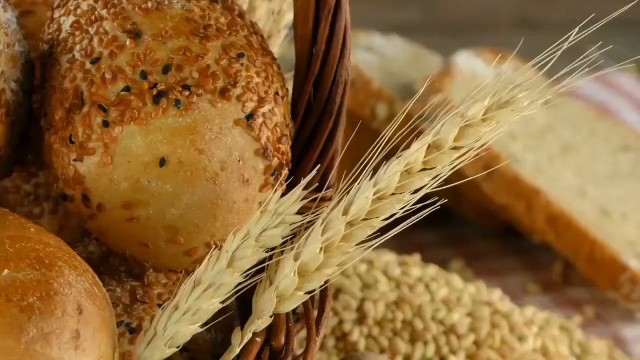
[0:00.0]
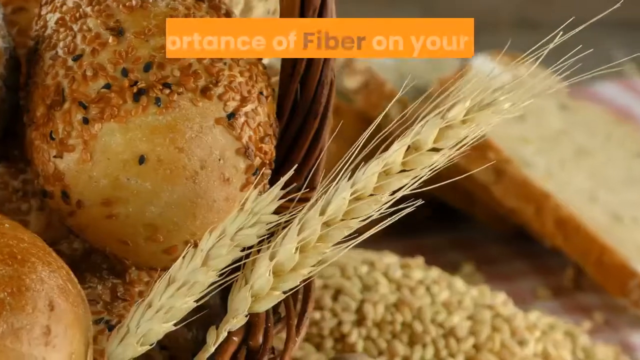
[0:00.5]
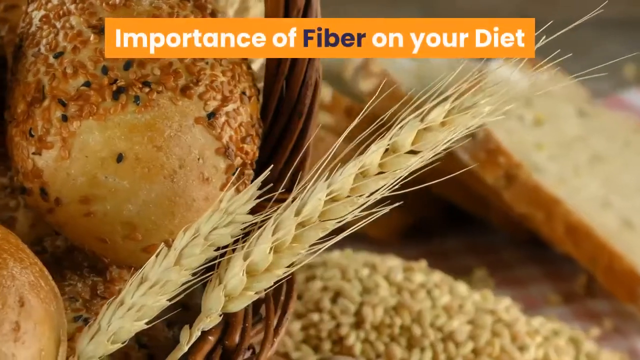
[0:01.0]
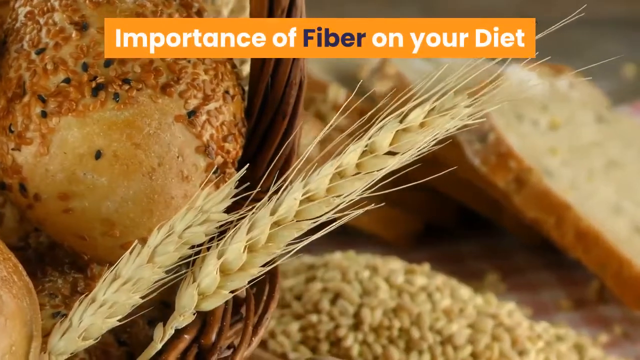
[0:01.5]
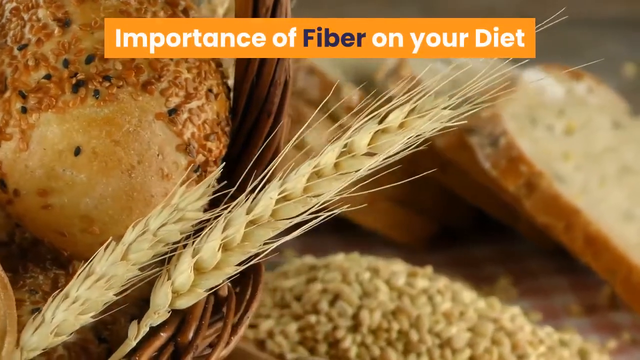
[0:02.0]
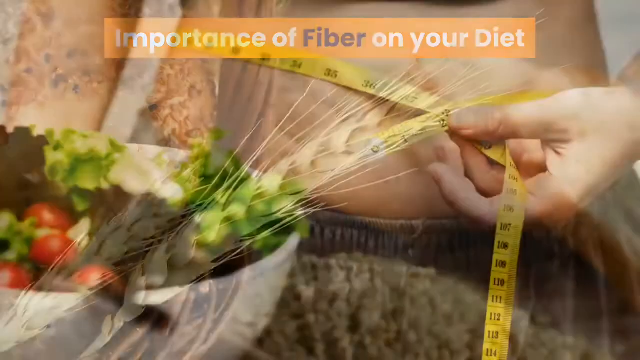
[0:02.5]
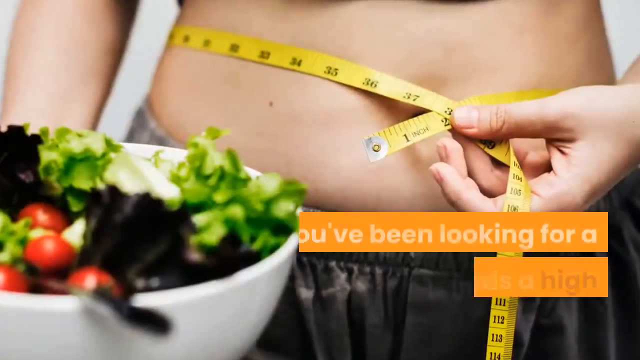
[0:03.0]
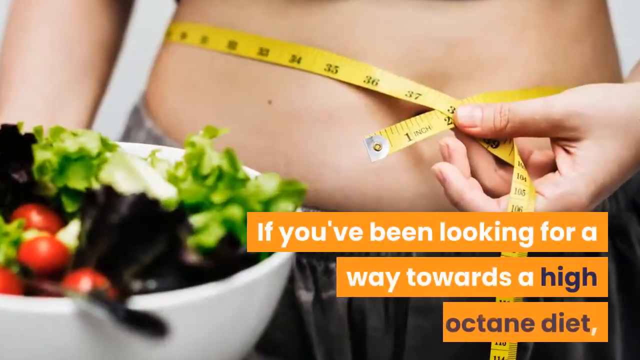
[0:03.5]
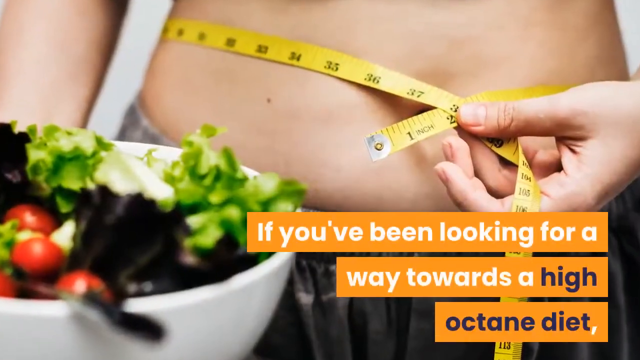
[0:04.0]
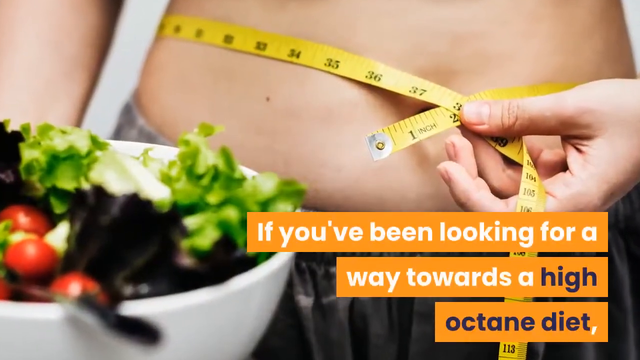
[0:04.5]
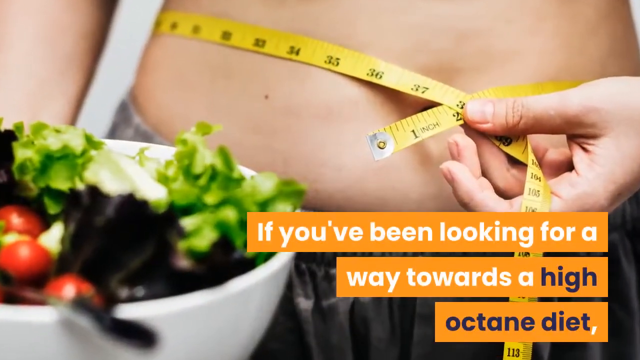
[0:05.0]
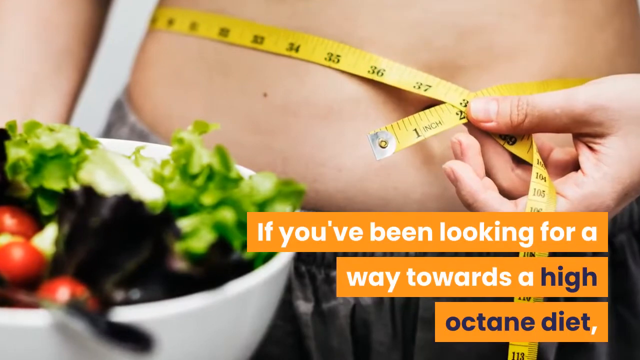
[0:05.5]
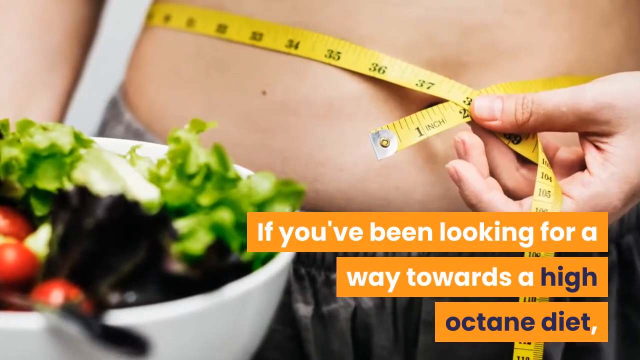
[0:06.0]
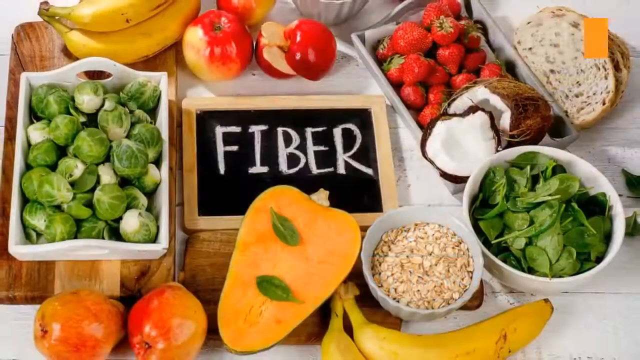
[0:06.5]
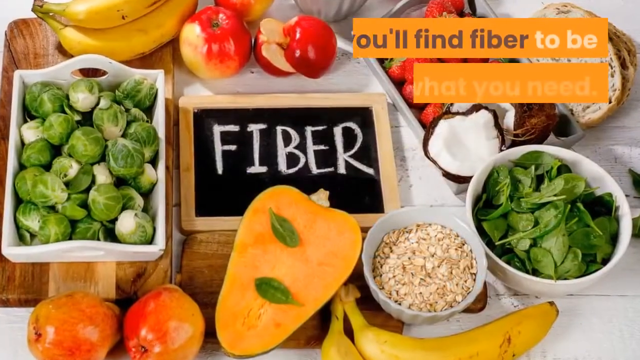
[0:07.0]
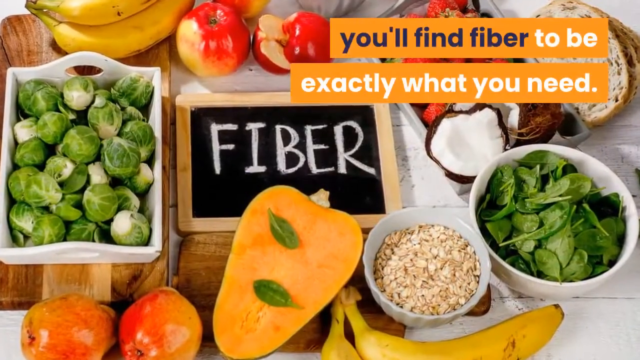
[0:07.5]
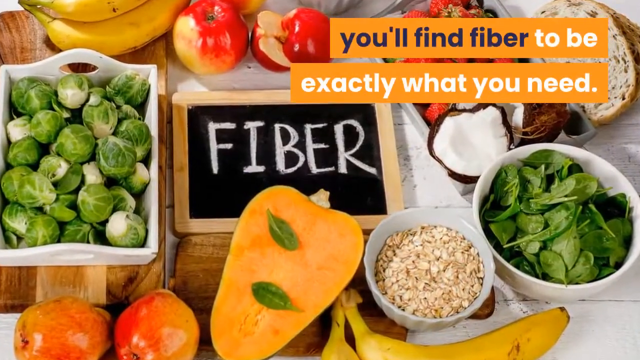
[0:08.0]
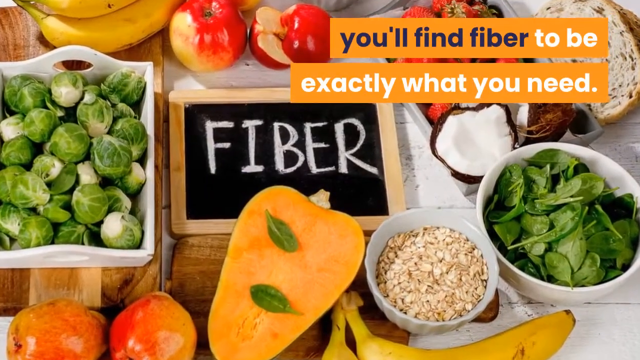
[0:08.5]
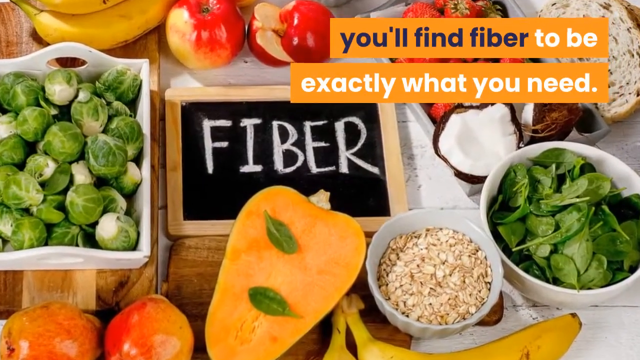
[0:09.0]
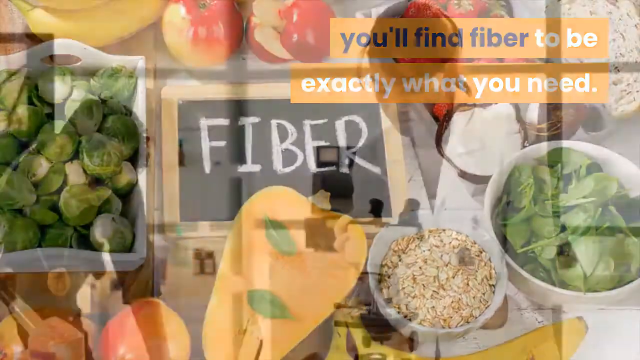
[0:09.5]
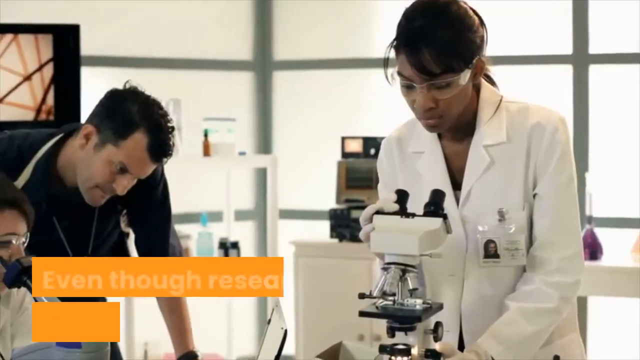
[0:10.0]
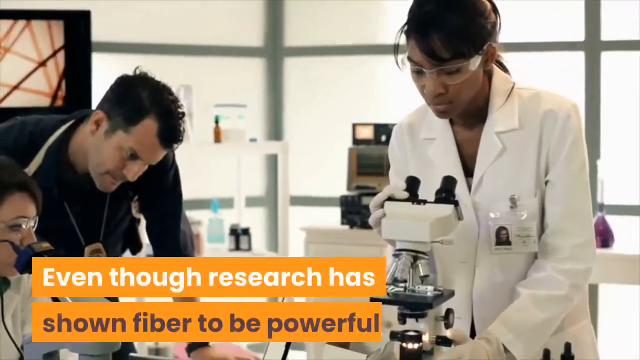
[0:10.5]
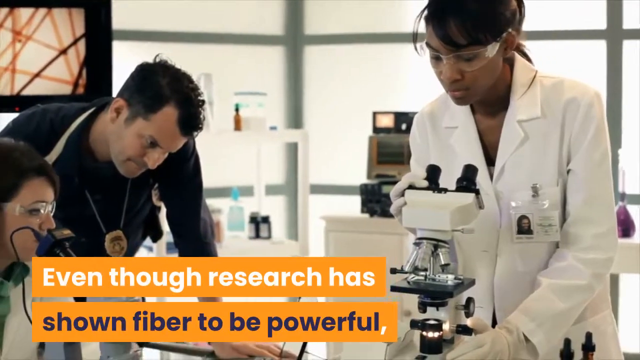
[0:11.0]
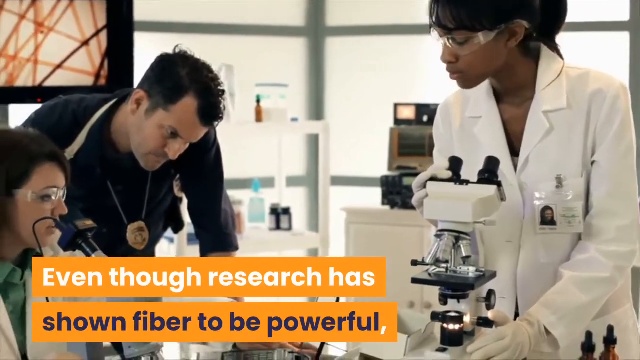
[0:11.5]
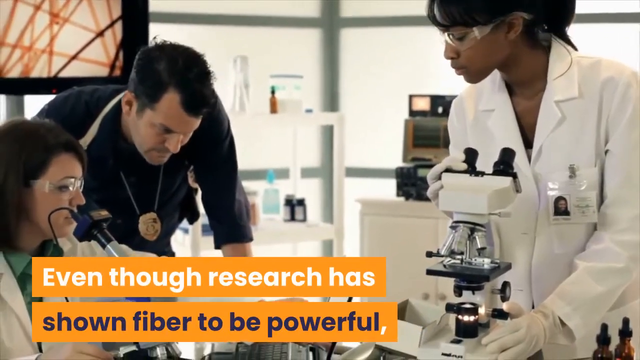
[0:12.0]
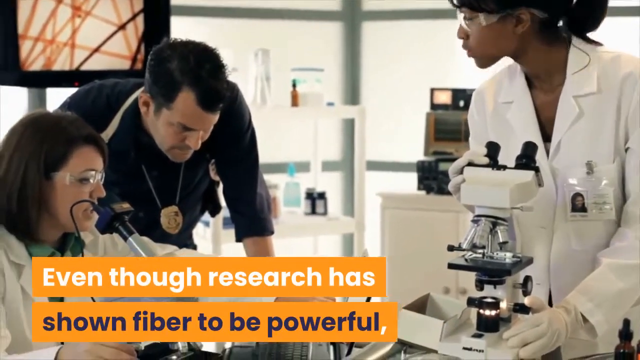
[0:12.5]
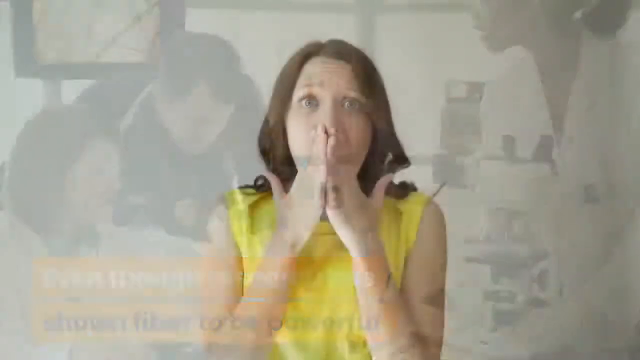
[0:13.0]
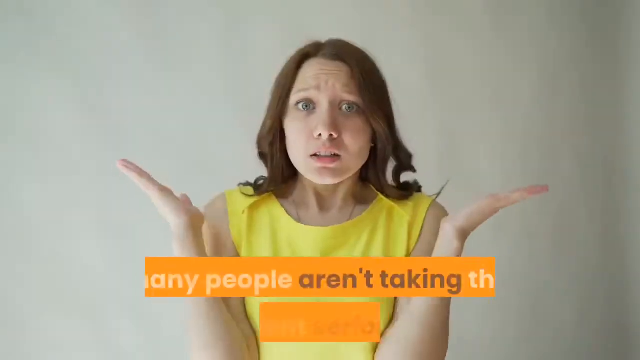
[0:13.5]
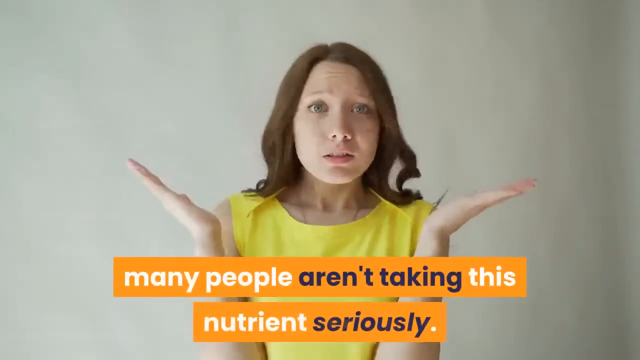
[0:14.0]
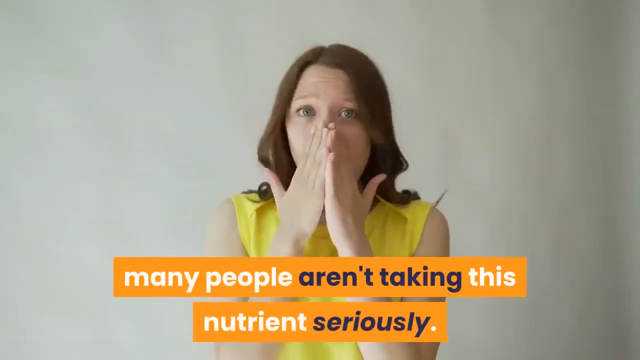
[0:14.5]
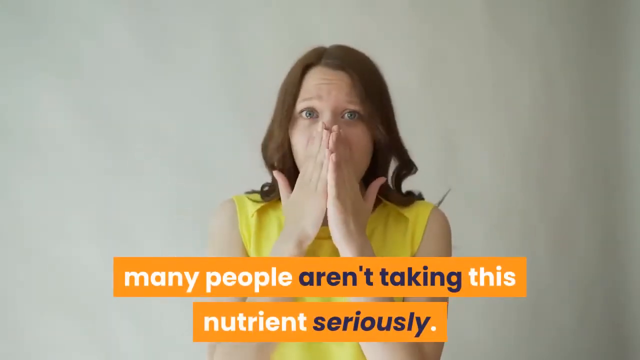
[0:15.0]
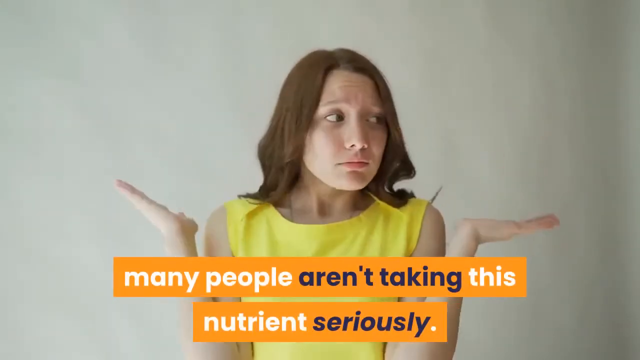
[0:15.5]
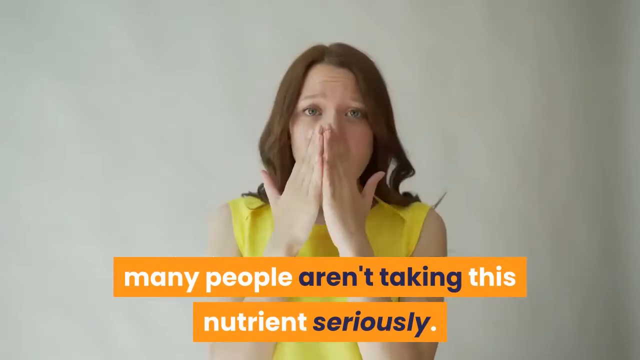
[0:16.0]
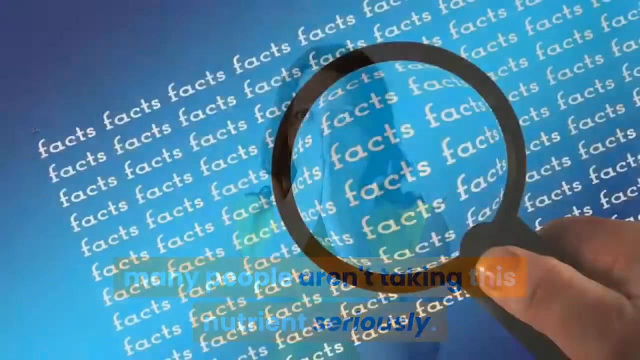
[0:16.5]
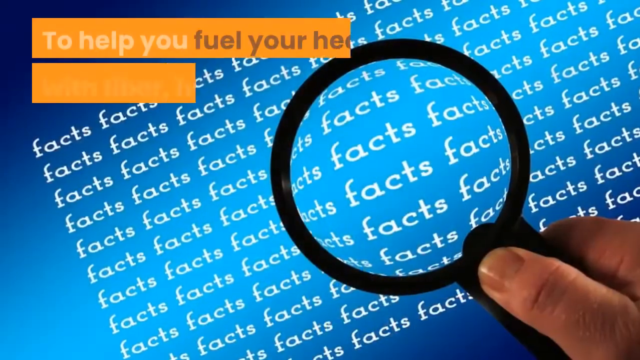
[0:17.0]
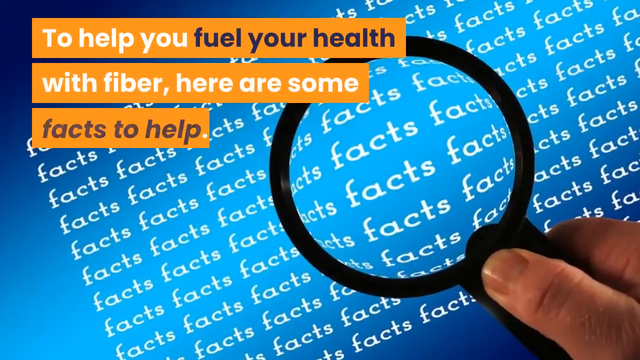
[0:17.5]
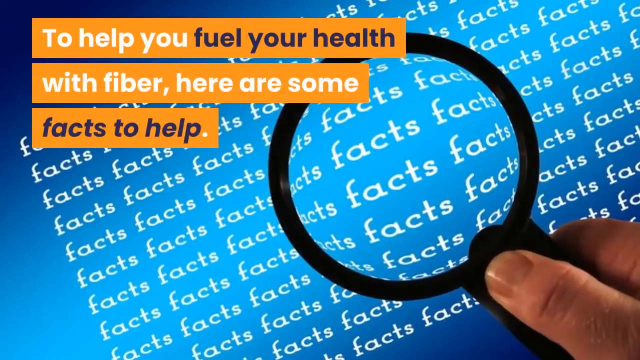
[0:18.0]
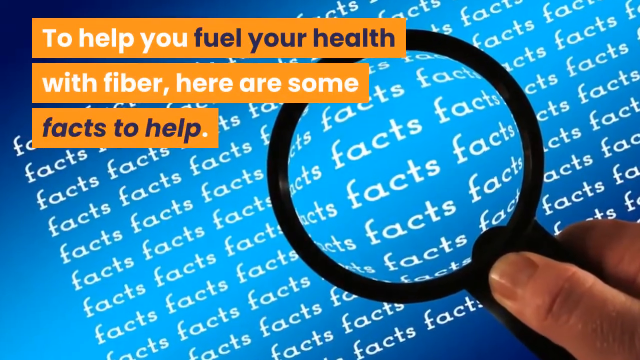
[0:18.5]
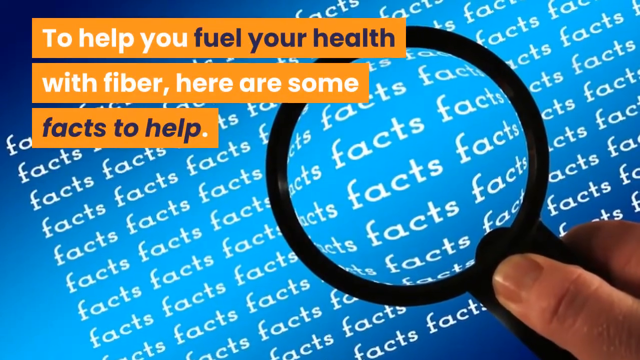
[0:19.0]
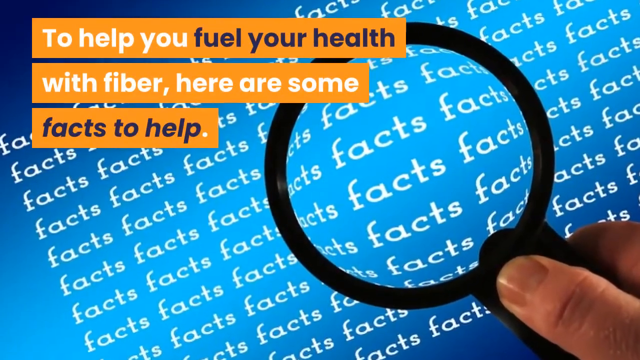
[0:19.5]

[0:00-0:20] The video opens on a screen showing different variations of bread and grains. The title reads "The importance of fiber." It cuts to a woman using a measuring tape to measure her own waistline while standing behind a bowl of what looks like some sort of salad. On-screen text begins "If you've been looking for a way towards a high octane diet." A photo follows of a table with many different food ingredients on it, and in the center is a tiny chalkboard with "fiber" written in chalk. The screen also reads "You'll find fiber to be exactly what you need when it comes to losing weight and having a well-balanced diet." The next screen shows what looks like a research lab.